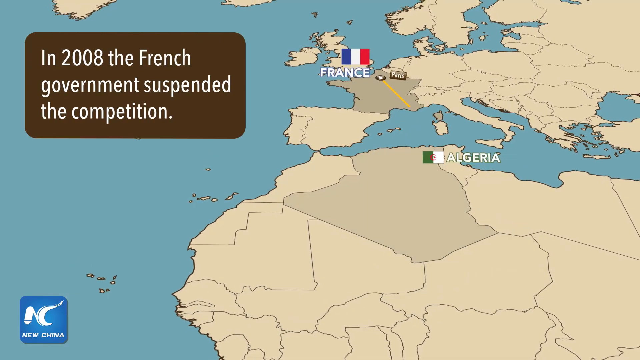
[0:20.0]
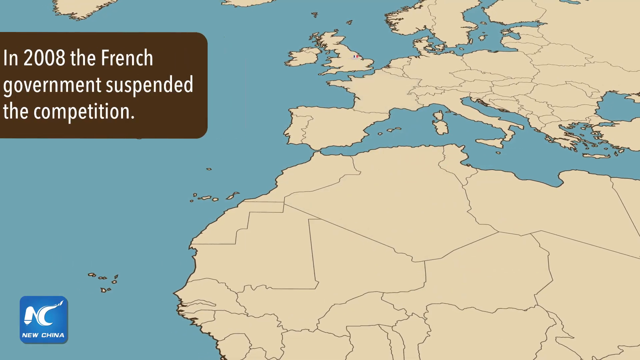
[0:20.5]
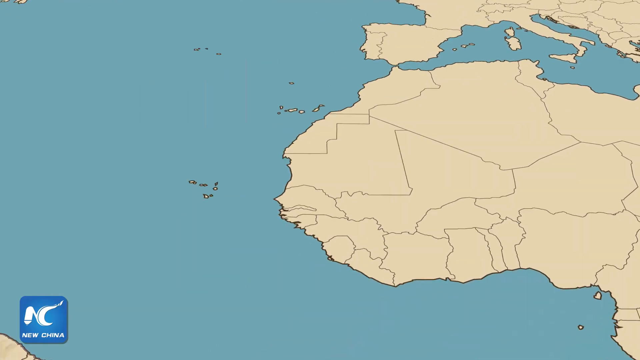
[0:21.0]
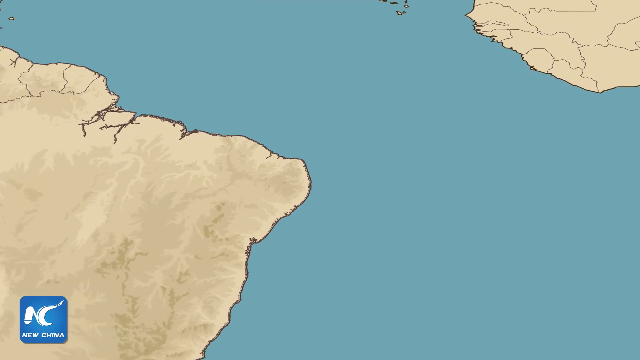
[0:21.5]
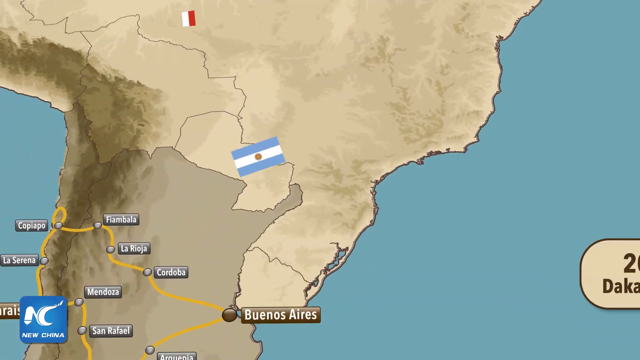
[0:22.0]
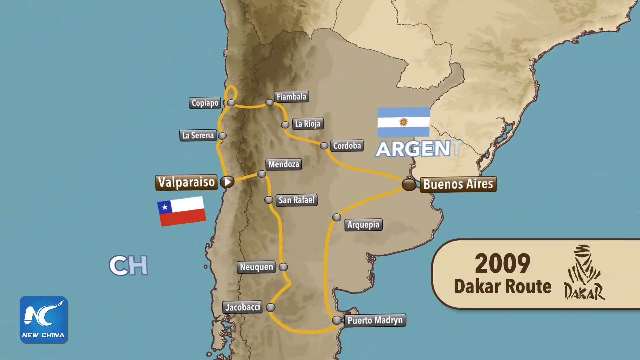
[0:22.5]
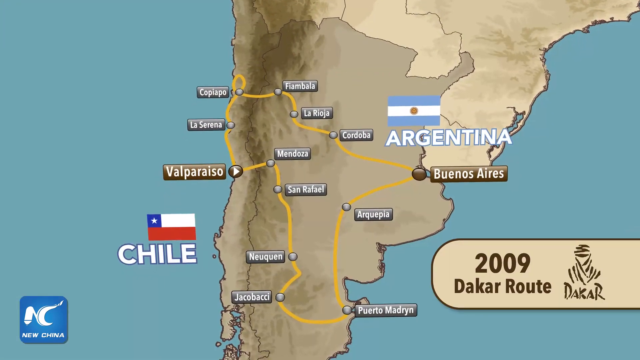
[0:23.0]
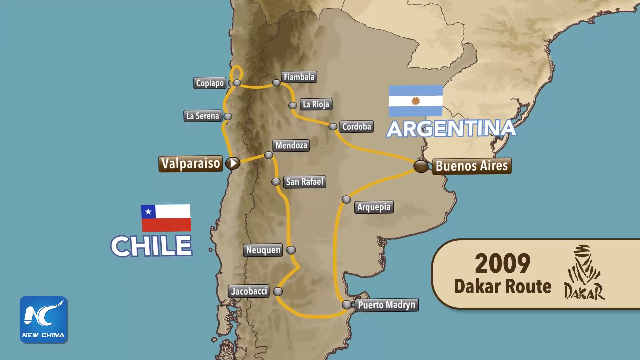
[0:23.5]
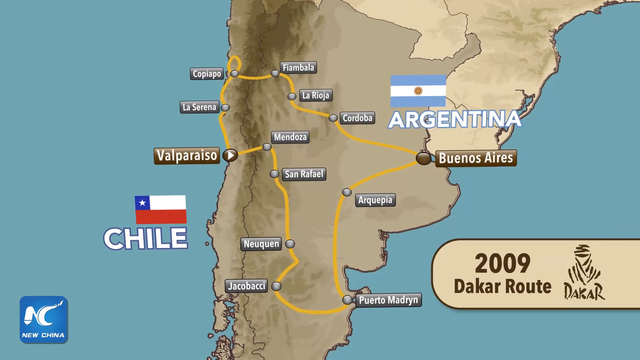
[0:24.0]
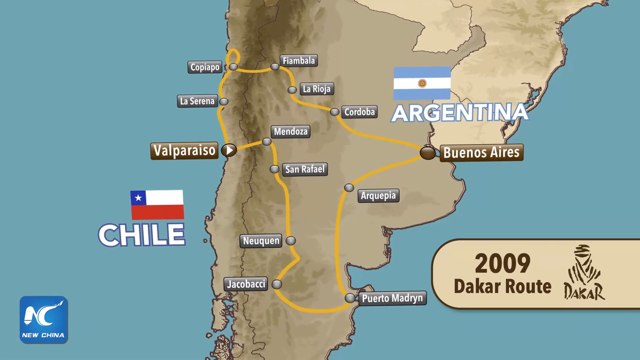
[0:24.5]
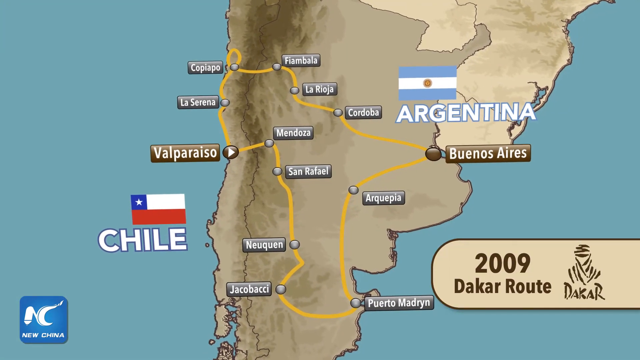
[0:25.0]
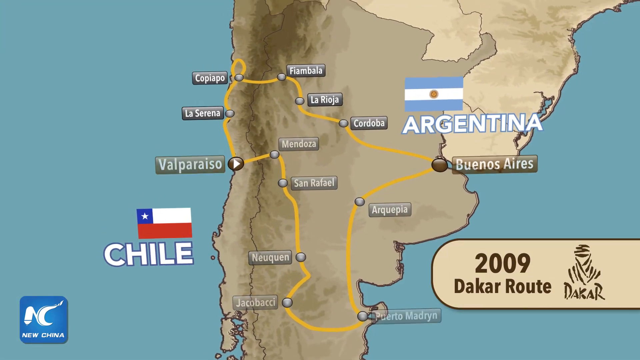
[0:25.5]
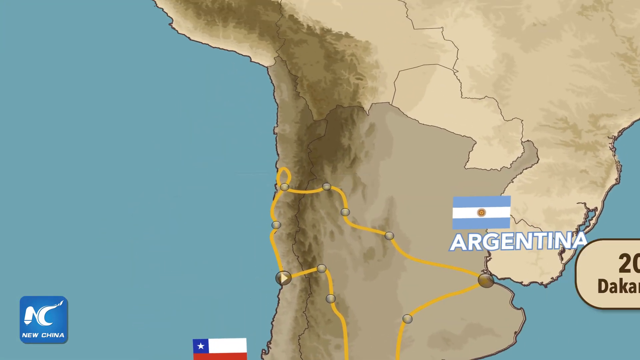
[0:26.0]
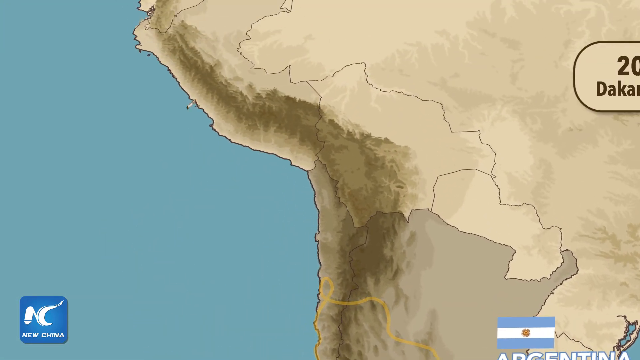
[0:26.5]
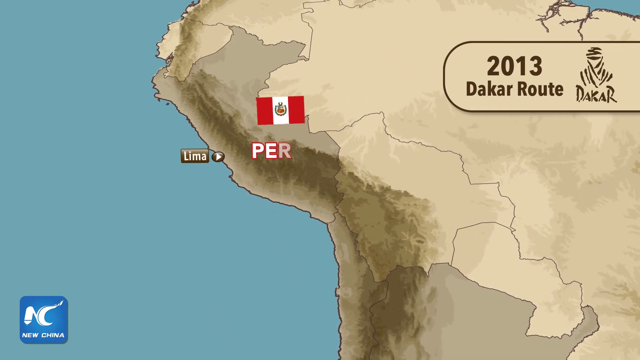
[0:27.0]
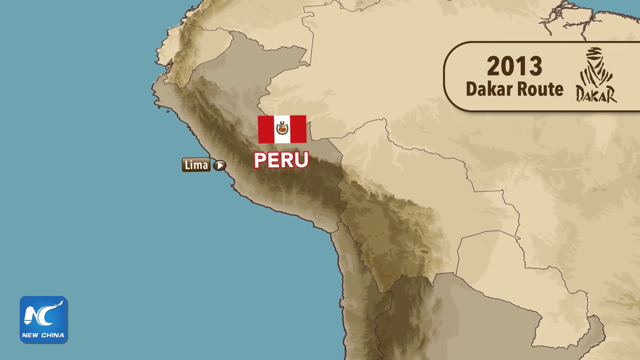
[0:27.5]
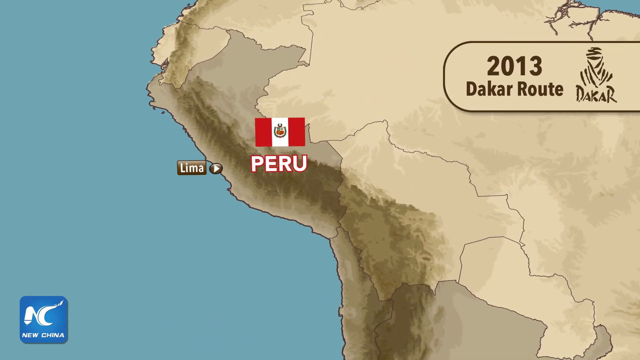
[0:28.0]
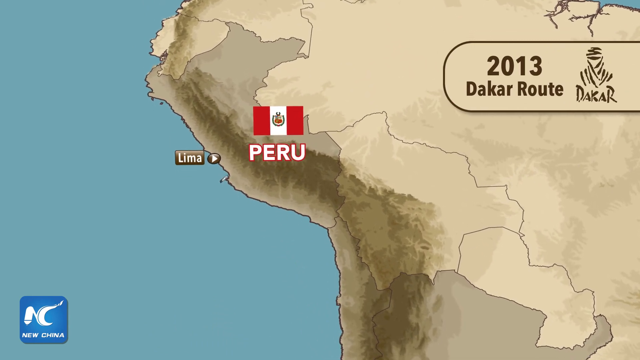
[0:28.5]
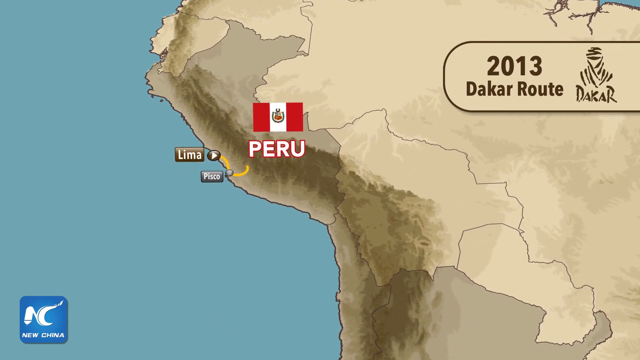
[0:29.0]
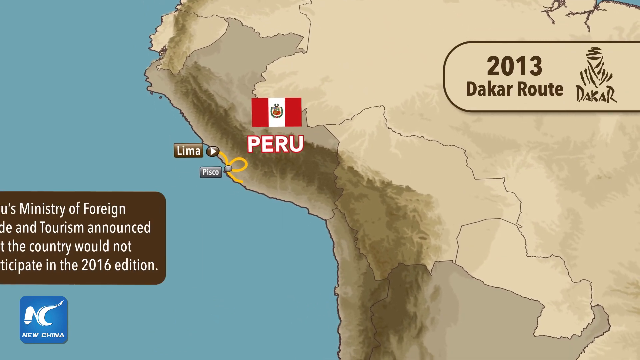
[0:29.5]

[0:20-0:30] The map continues, starting with the graphic reading "2008 French government suspended the competition". Countries such as Algeria and France pop up on the blue background, with the land in tan. Text reads "Chile 2009 Dakar route". Chile pops up along with a bunch of cities all over the map, including Buenos Aires, Argentina. The camera focuses in closer. Peru appears with text reading "2013 Dakar route" and something like "Peru prime minister". The blue represents water.